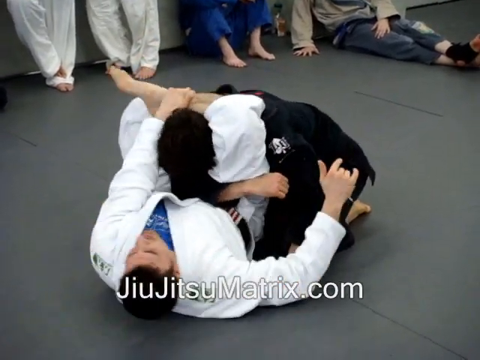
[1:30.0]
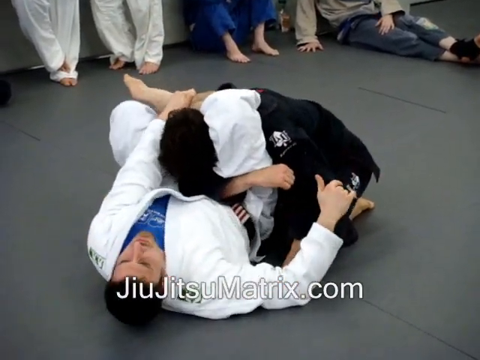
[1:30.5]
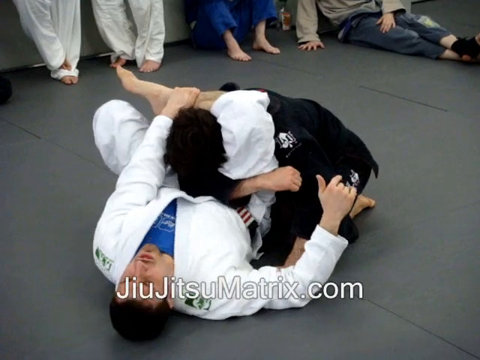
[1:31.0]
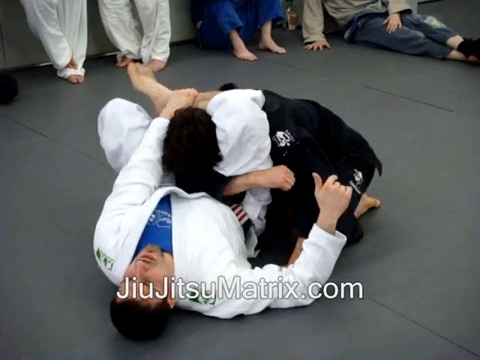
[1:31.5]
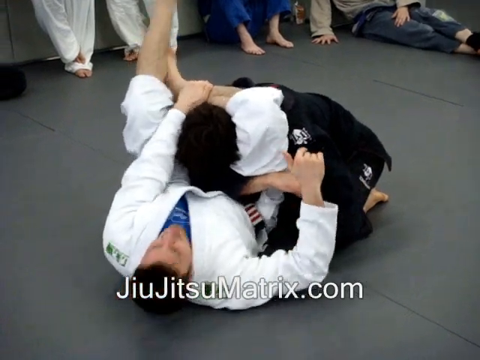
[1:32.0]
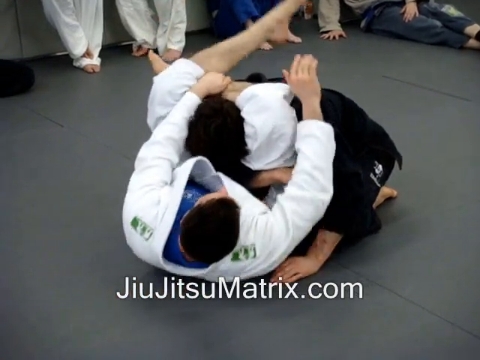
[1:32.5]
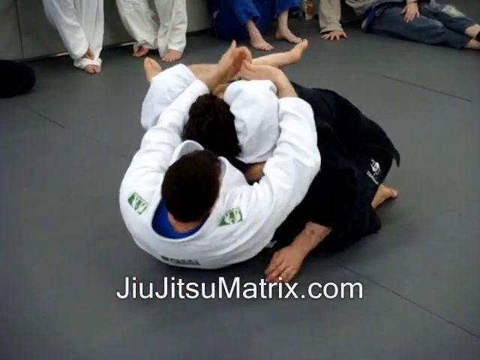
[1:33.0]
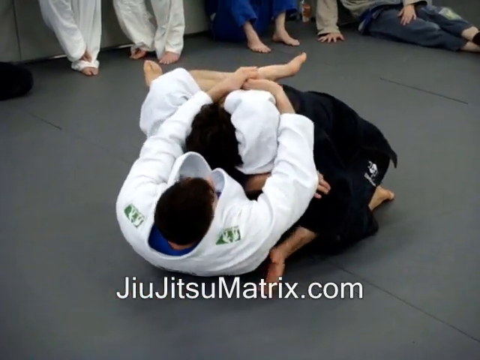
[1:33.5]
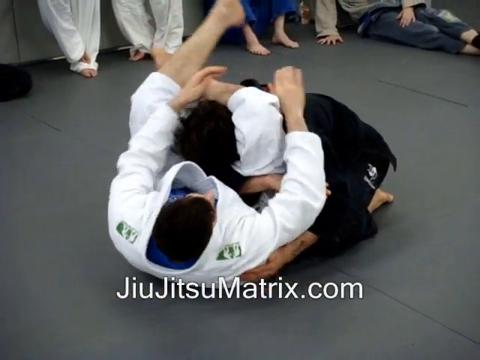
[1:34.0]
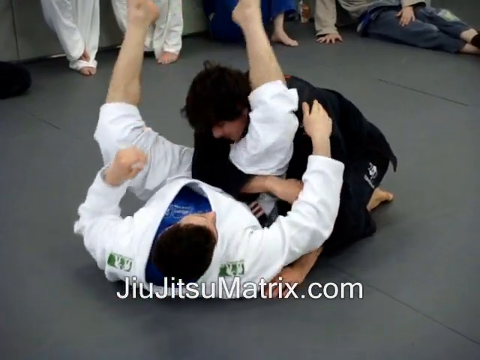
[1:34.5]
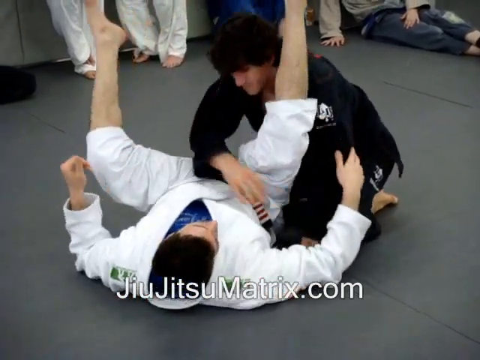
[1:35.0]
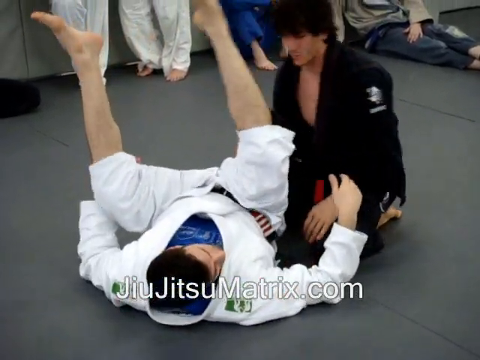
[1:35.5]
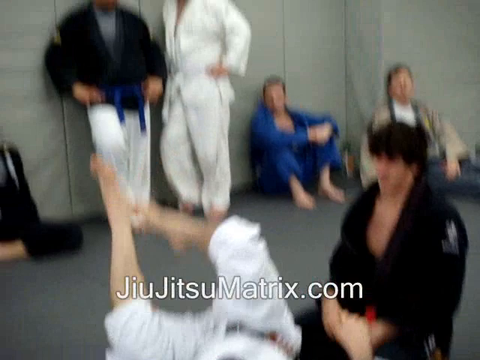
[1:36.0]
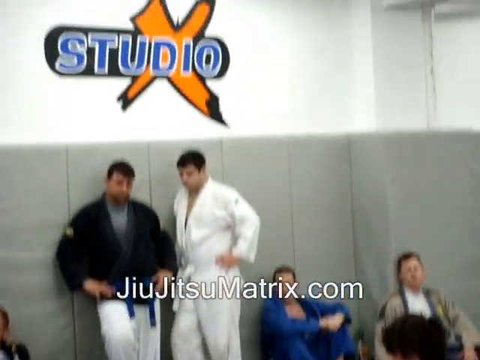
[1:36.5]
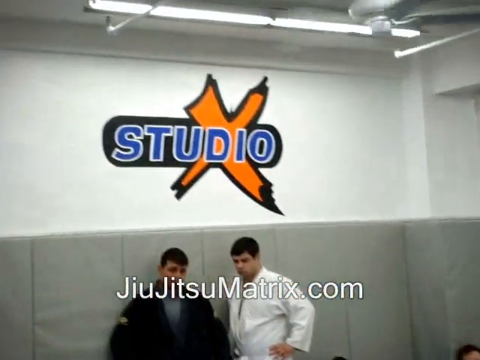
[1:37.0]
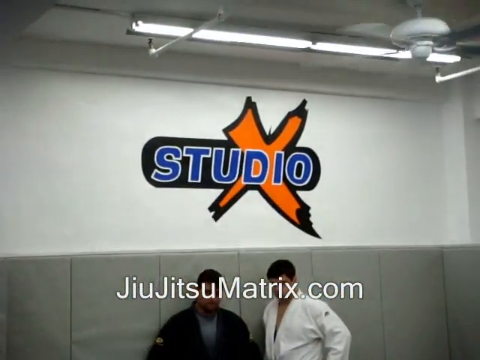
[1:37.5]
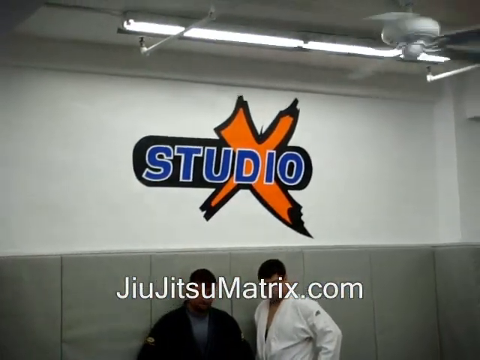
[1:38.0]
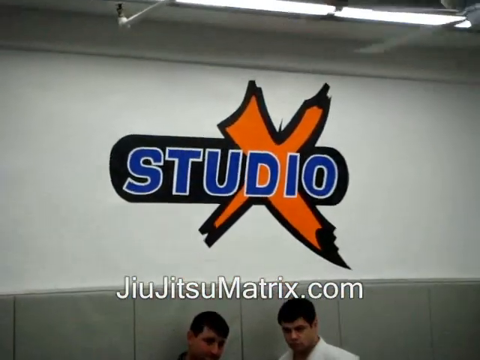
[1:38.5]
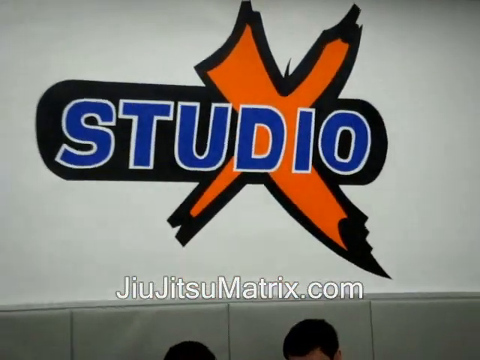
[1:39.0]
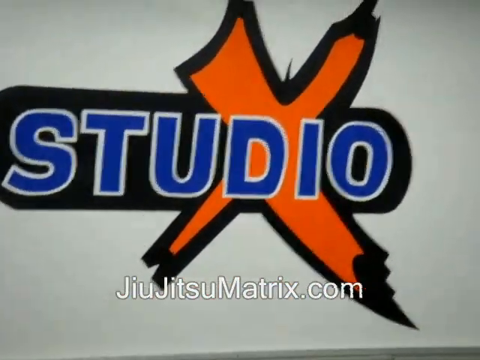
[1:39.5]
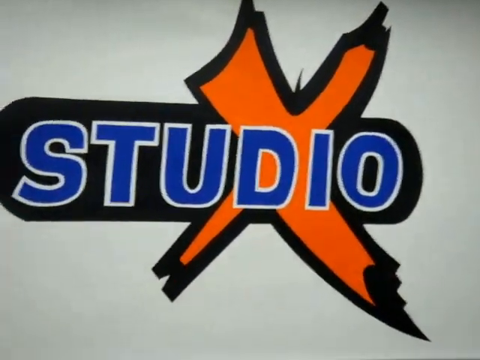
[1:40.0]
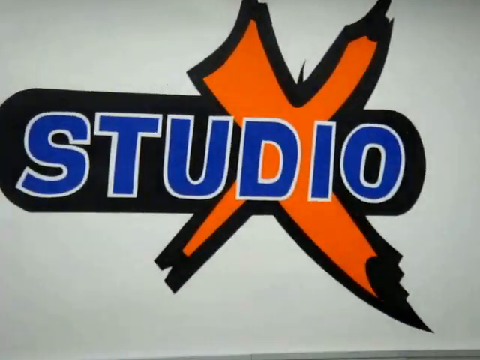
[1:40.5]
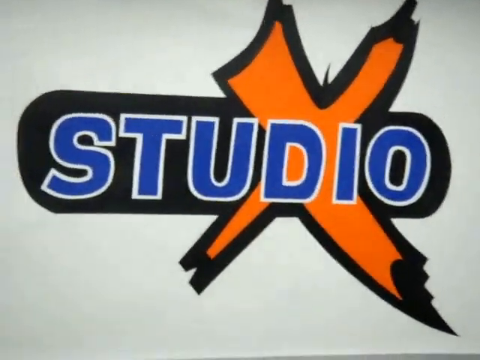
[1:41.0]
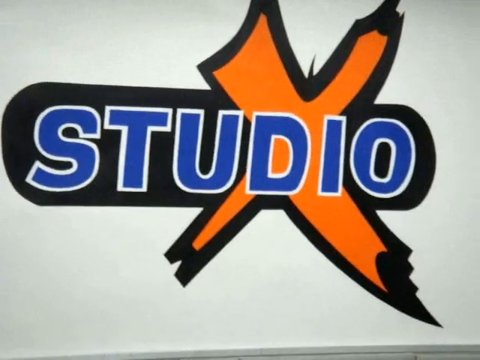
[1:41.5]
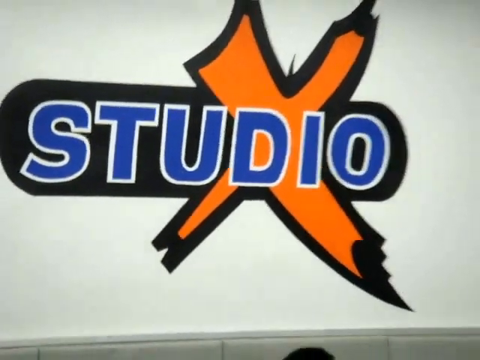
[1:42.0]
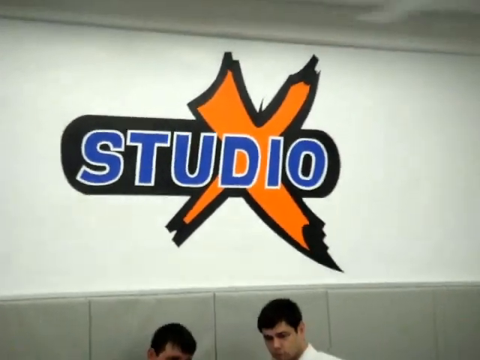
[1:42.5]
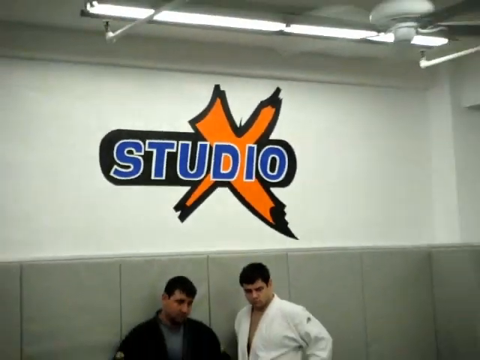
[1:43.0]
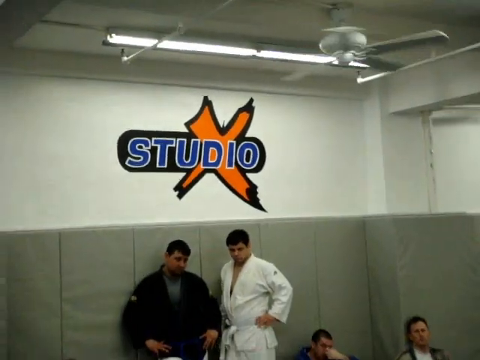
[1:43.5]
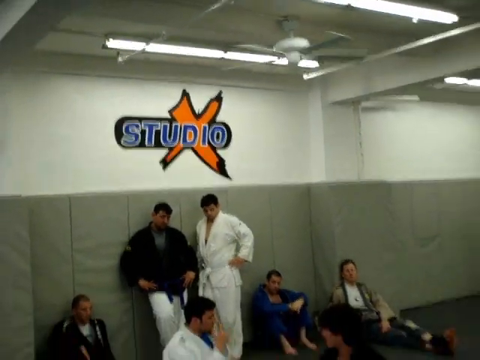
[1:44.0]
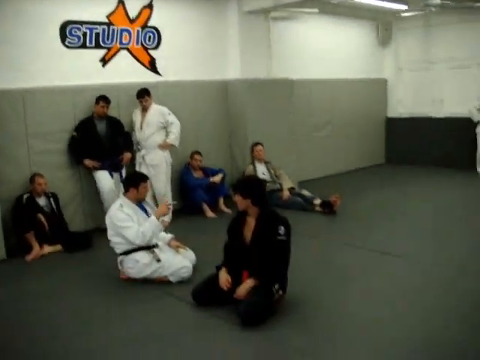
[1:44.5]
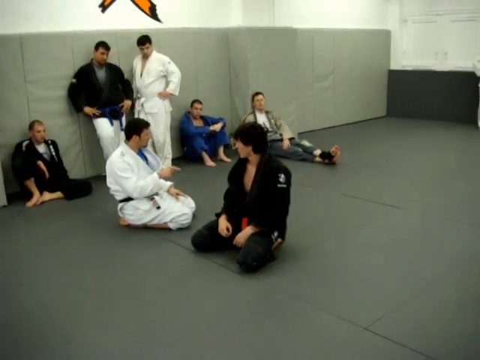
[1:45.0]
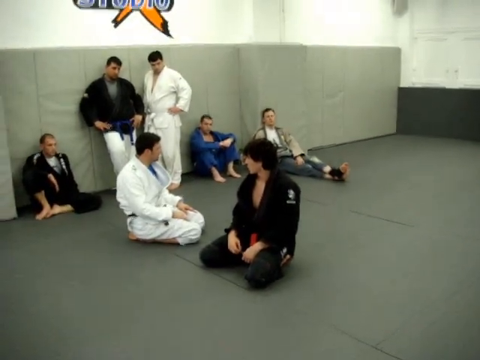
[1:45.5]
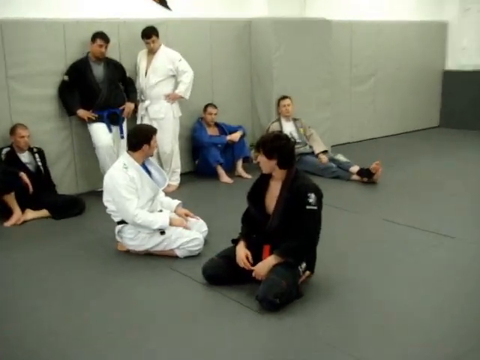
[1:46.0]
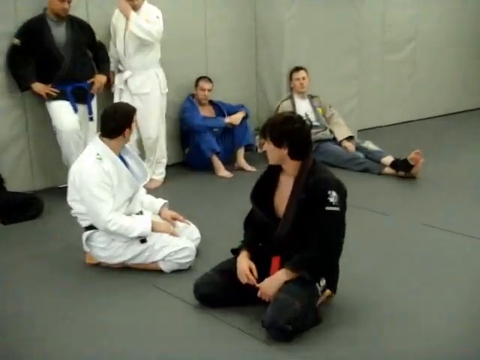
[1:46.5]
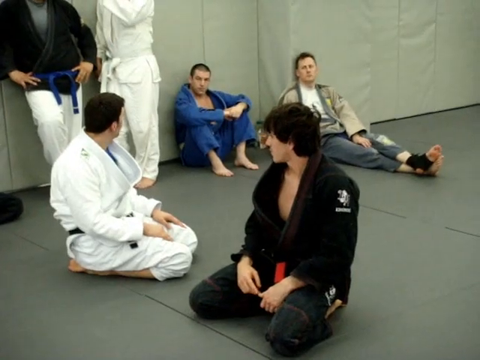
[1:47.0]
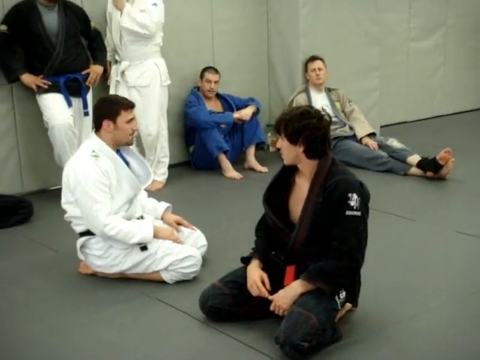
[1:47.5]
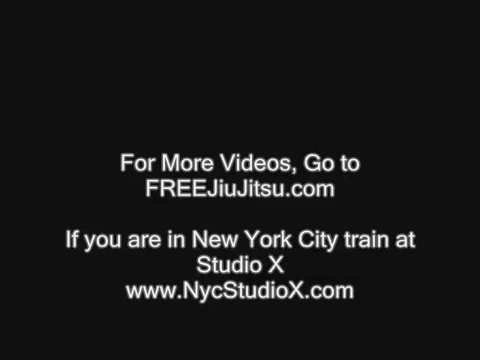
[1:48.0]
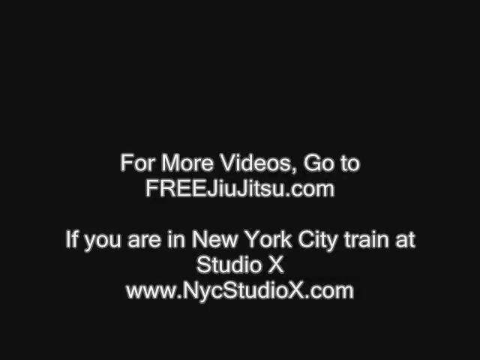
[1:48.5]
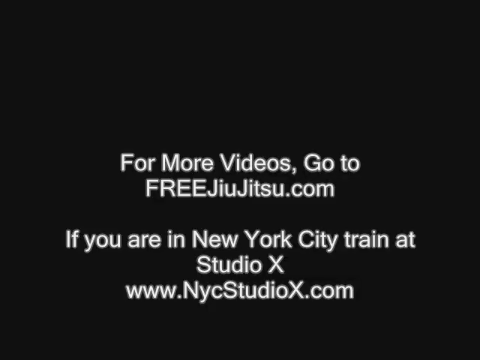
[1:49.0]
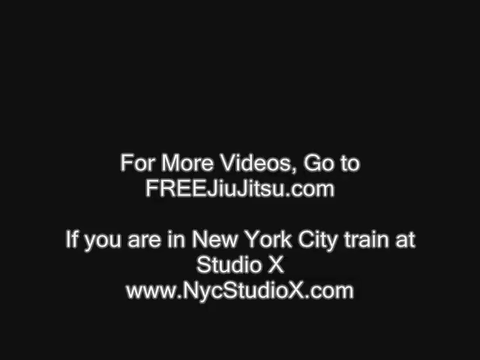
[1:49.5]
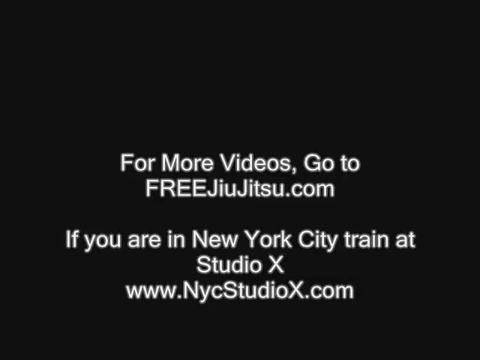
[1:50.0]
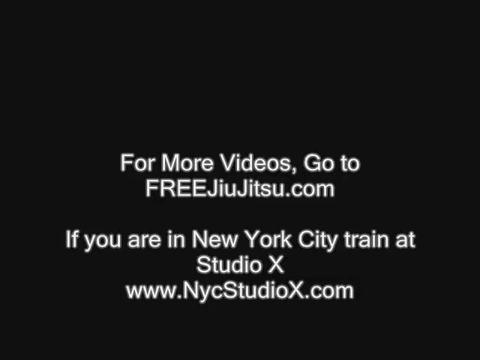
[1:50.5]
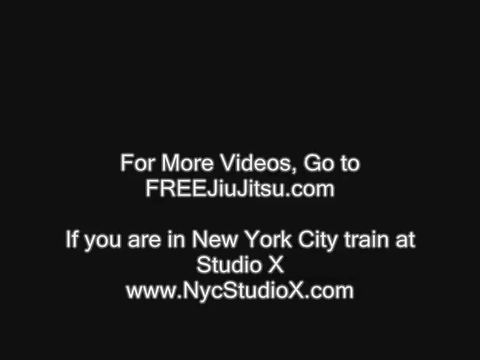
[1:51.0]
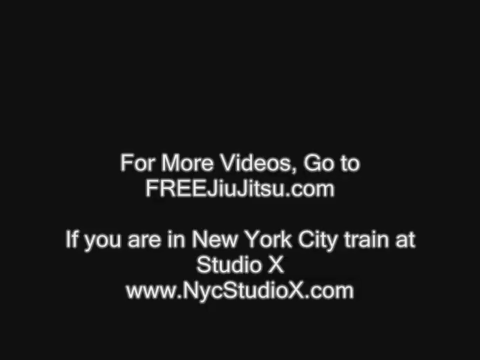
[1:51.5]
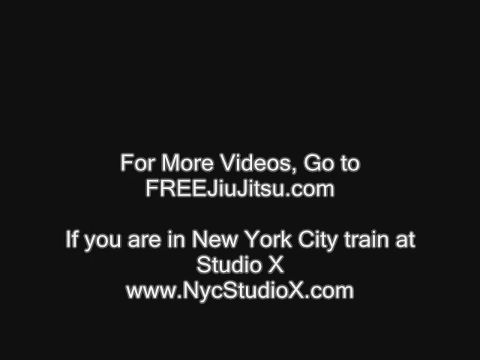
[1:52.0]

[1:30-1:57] The student is on his knees with his right arm linked around the teacher, who is on his back. The teacher grabs his right leg by the ankle with his left arm, using his right arm to hold the student's arm. The teacher shifts about a bit, then lifts his left leg over his right ankle, placing the right ankle into the inner knee of the left leg. He moves his right arm to link into a sort of cupped position with his other hand, around the student's head and his own right knee. He taps the student on the arm, both let go, and they seem to separate. The camera pans up, showing the original men in the background standing/sitting. It pans up further to a white wall with a Studio X sign: "studio" in blue with an orange X. There is a ceiling fan and some lights. The camera zooms in shakily on the sign, which has a black outline, the word "studio" with a white outline and inner blue core, and a sort of hatch-style X behind it. It then zooms back out to the room, showing five men in the background and the two main men. The teacher in white appears to be talking to the student in black and explaining some things. The screen then goes black, with text reading "for more videos go to" followed by "free" in all capitals and "jiu-jitsu.com," and "If you are in New York City, train at Studio X www.NewYorkCityStudioX.com." The black screen remains for roughly the last six seconds.